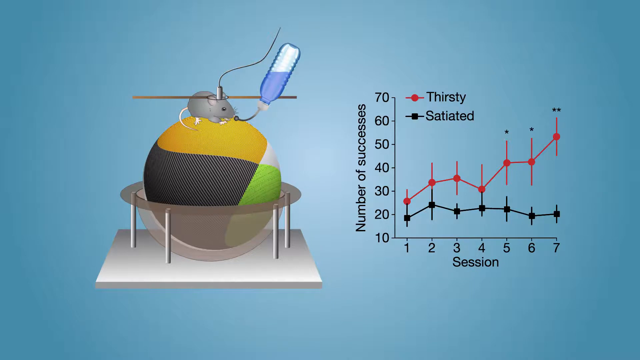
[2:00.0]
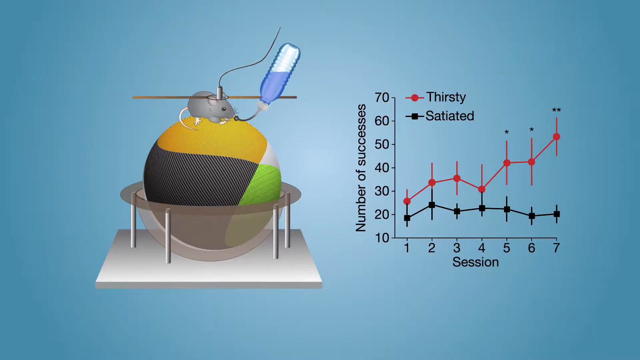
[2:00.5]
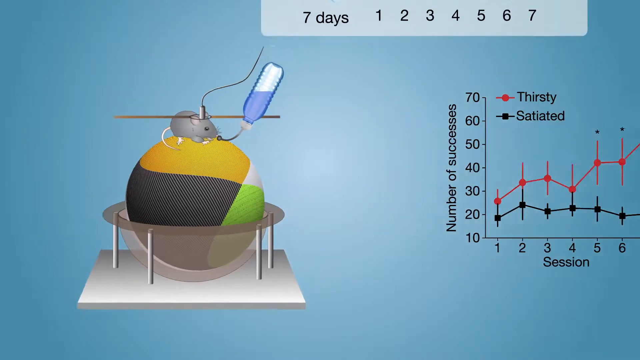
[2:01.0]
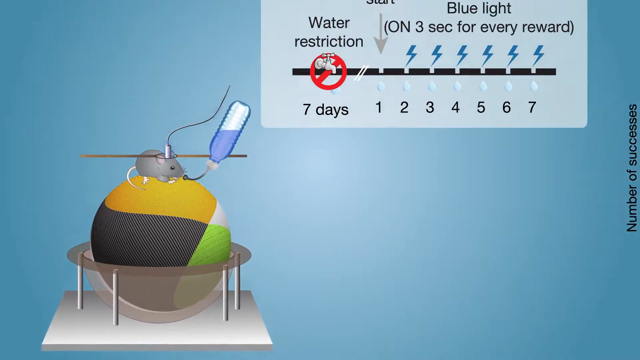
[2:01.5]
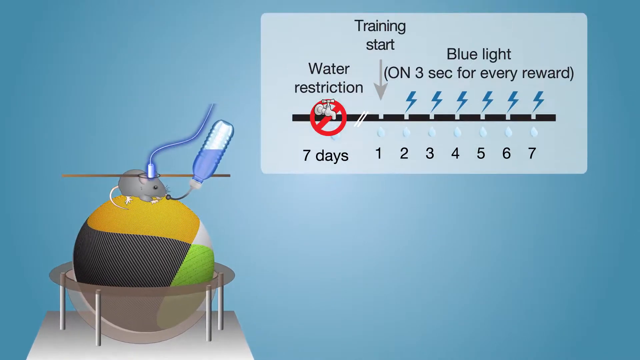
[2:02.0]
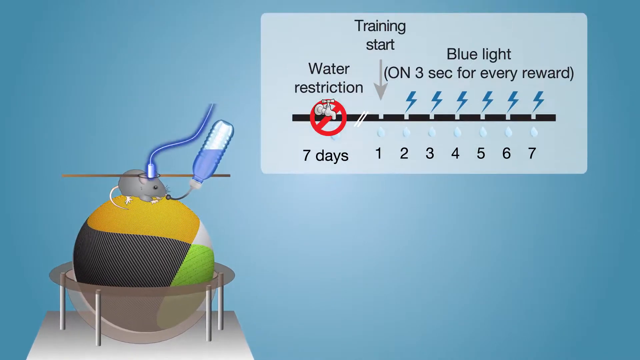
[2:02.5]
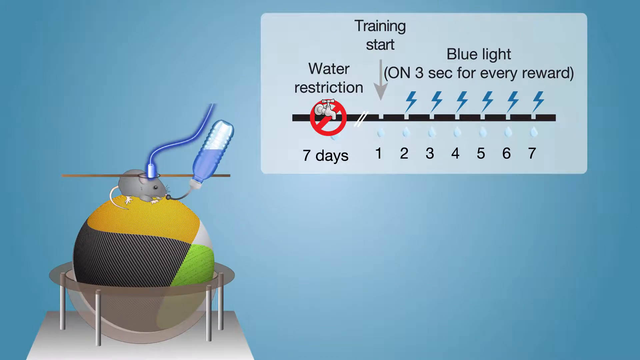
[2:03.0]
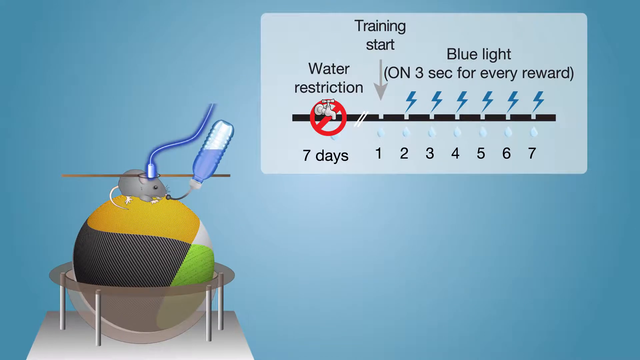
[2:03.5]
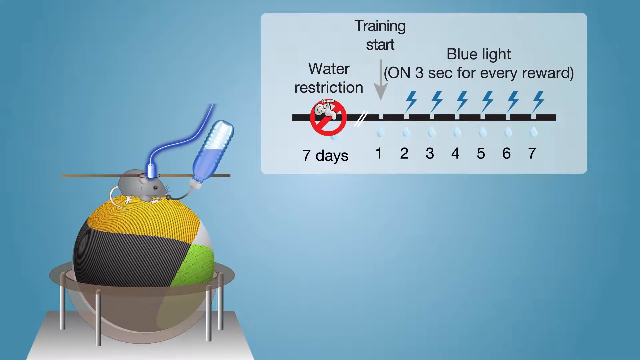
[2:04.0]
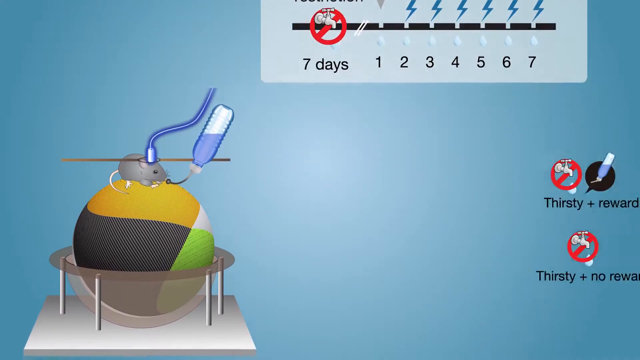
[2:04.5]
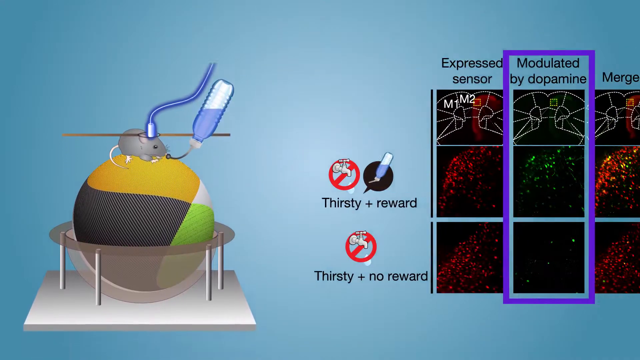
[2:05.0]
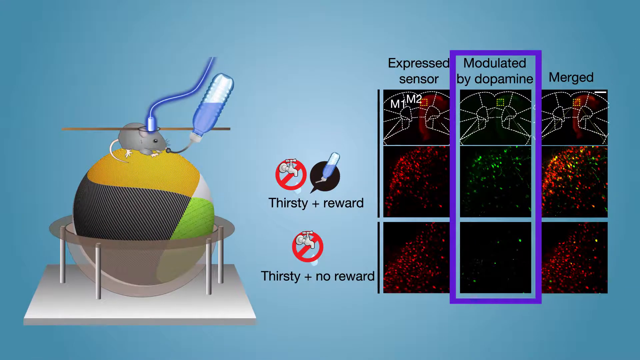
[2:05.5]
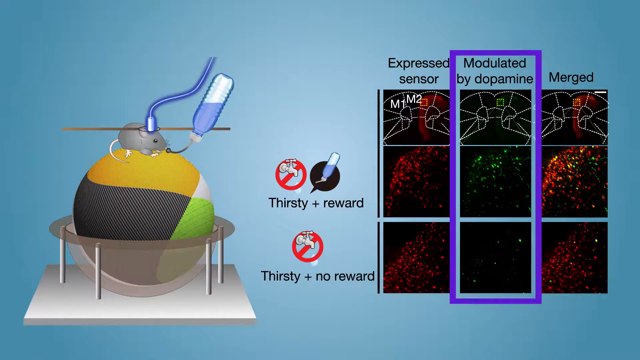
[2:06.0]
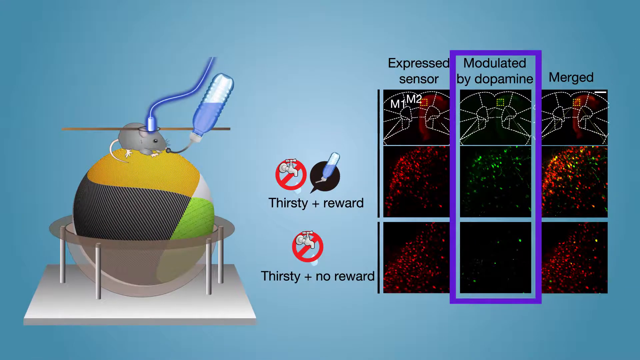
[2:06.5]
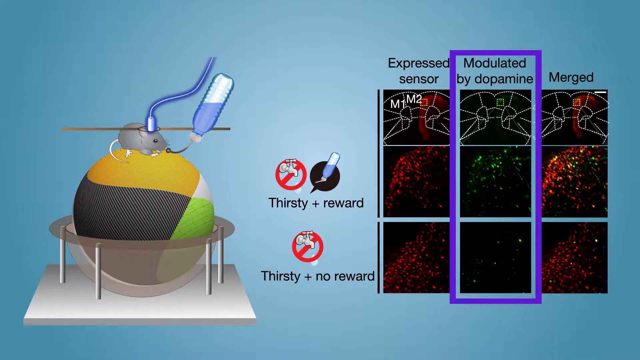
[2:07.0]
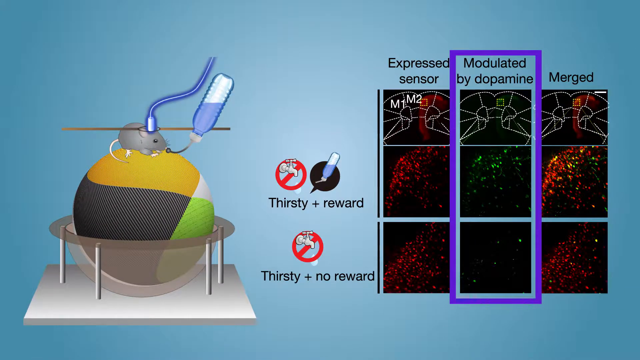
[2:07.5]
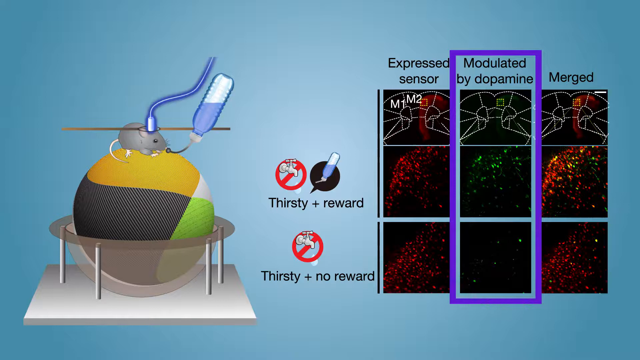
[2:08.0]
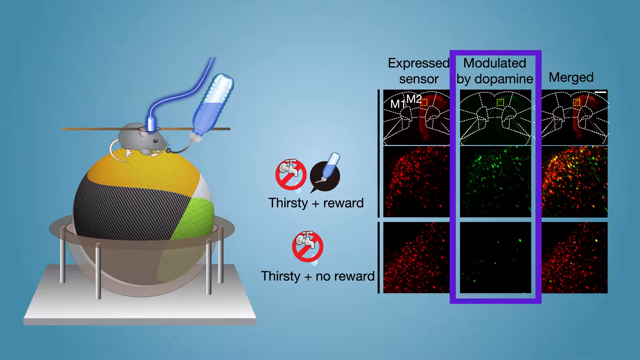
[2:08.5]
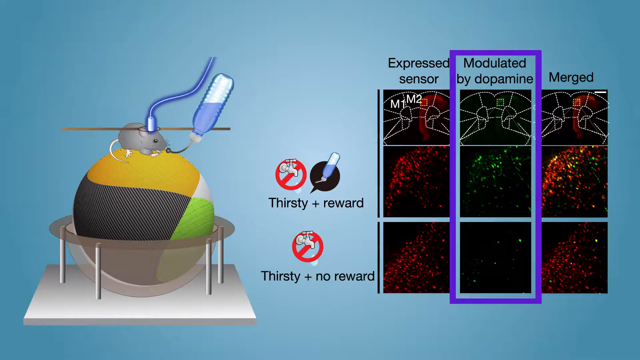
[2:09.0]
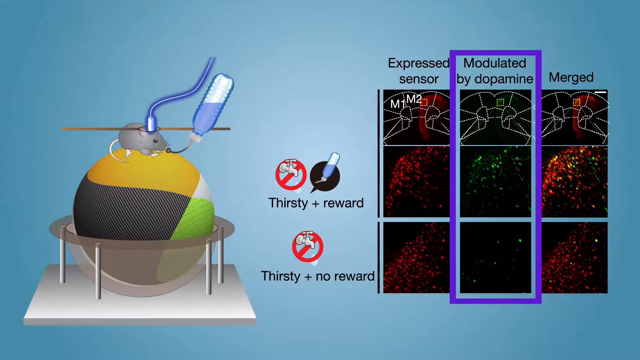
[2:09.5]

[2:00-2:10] The same line graph appears only very briefly. It plots session length over the number of successes, with two lines showing the thirsty and the satiated condition. When satiated, the number of successes is lower; when thirsty, the number of successes is much higher.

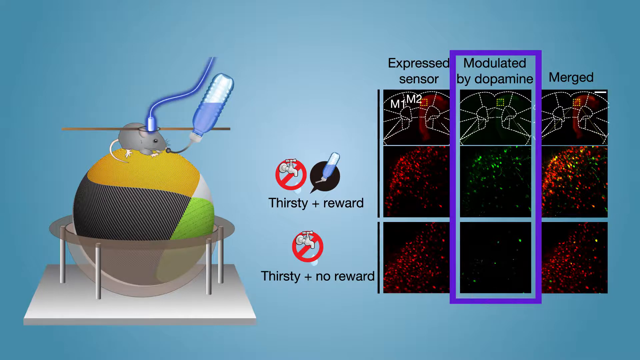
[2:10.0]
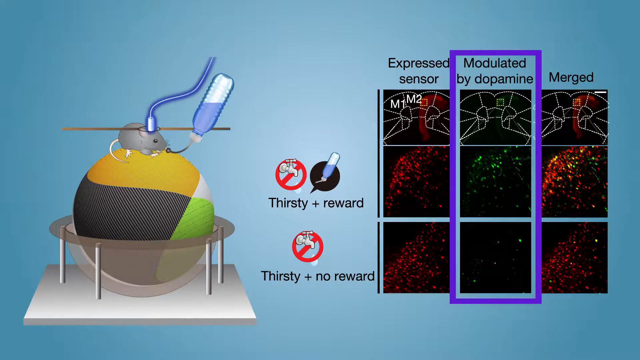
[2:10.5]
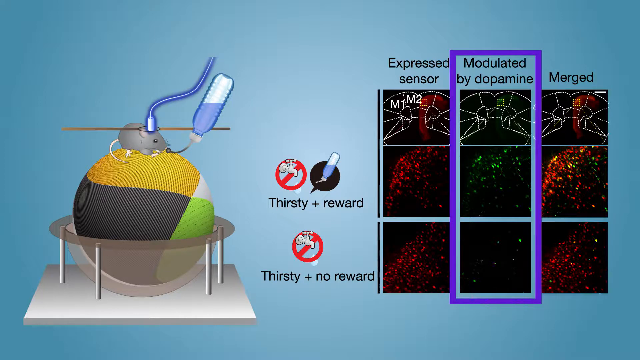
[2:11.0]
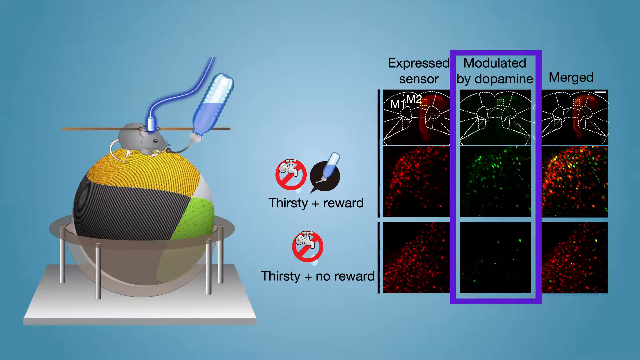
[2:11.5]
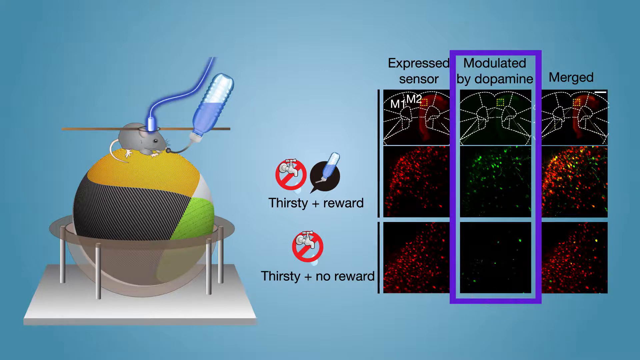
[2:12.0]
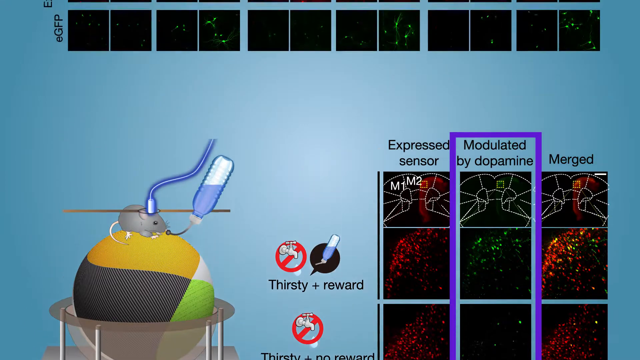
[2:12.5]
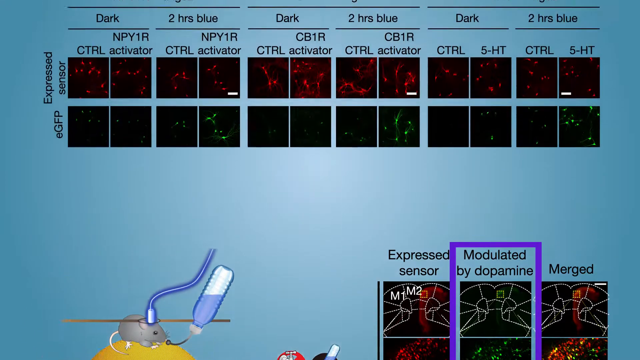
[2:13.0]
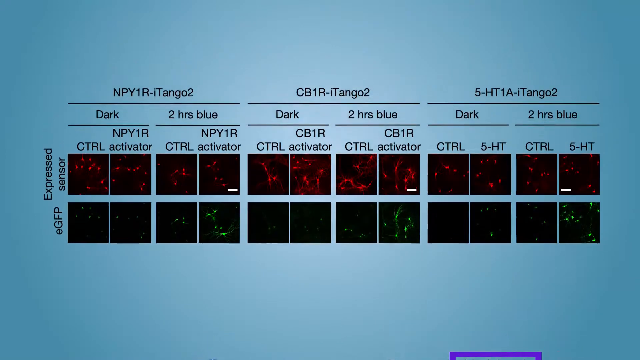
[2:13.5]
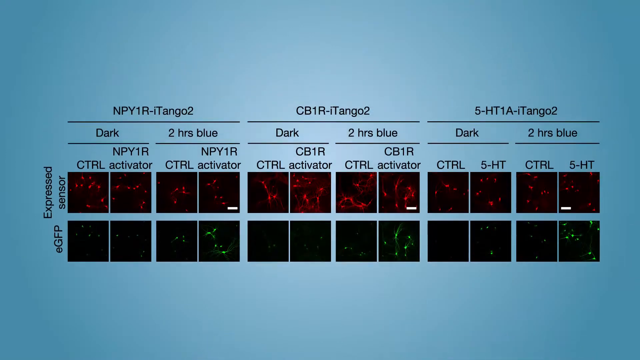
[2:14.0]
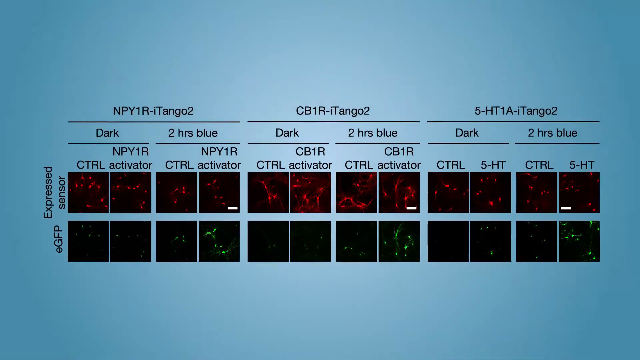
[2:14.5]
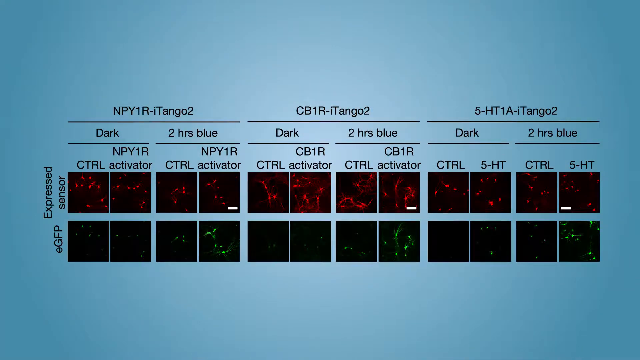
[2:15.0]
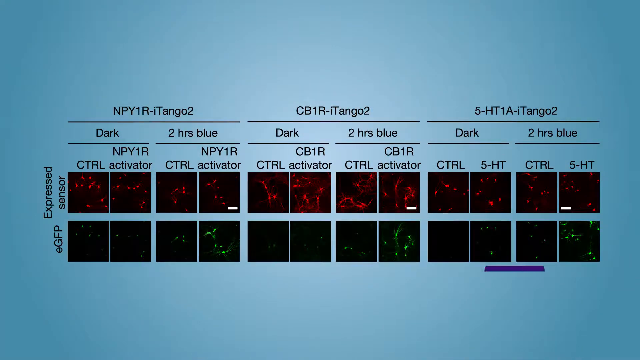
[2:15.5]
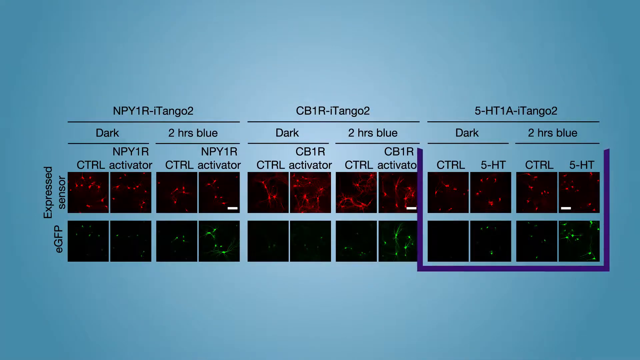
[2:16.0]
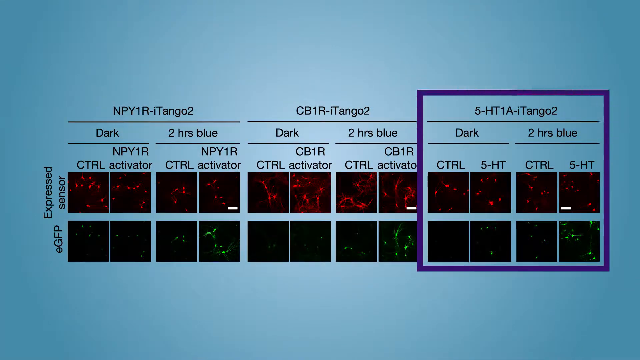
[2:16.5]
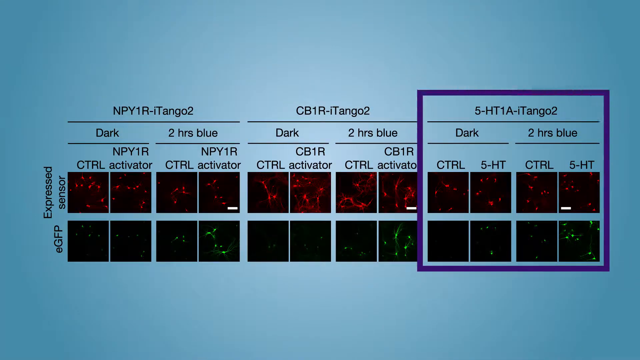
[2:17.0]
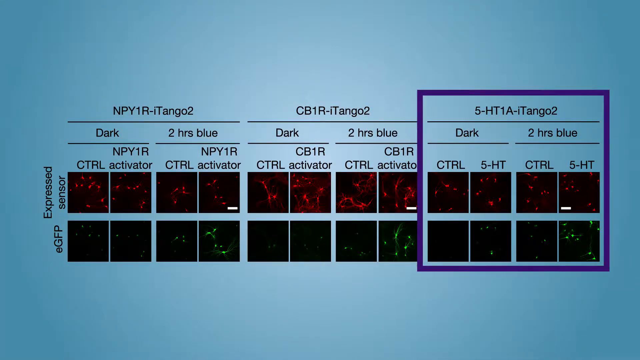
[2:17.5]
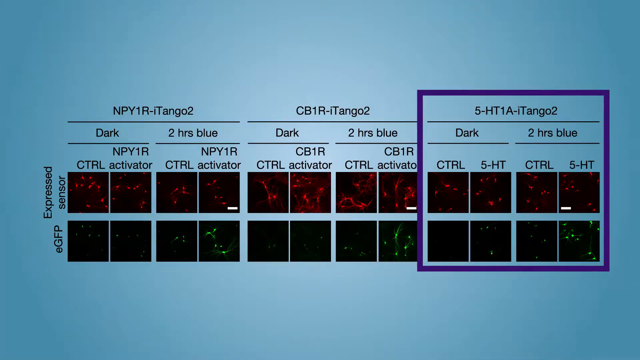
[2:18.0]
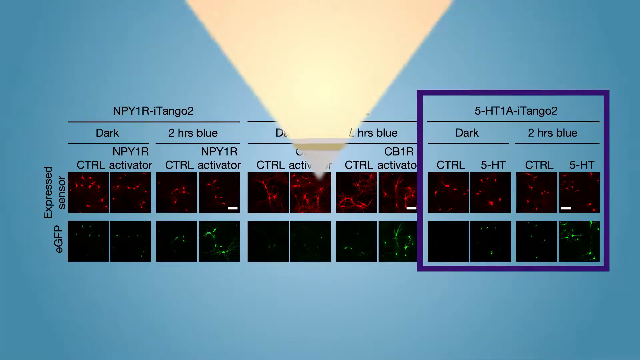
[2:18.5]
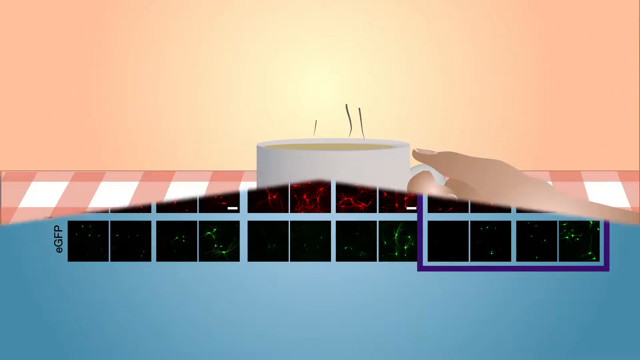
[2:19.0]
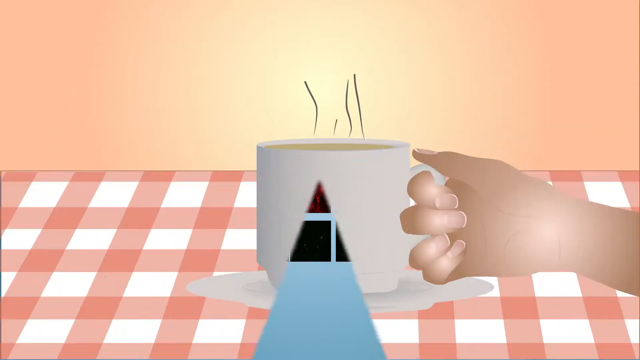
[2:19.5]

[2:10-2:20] A diagram shows three different examples, labeled from left to right "Express Sensor," "Modulated by Dopamine" and "Merged," with "Modulated by Dopamine" in a purple box. Something is then brought in from the top and scrolled down, revealing three sections: "MPY1RI-Tango2" on the left, "CB1RI-Tango2" in the middle and "E5HT1AI-Tango2" on the right, with the one on the right highlighted in a purple box. Next, someone is shown holding a glass or mug of coffee.